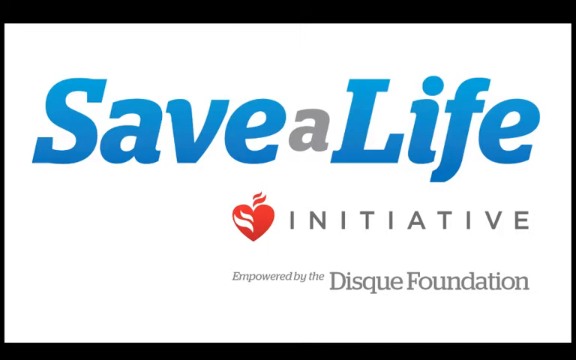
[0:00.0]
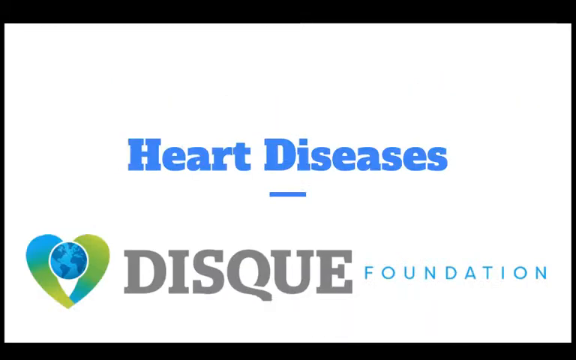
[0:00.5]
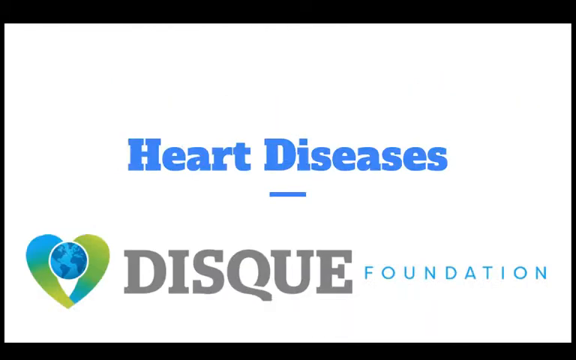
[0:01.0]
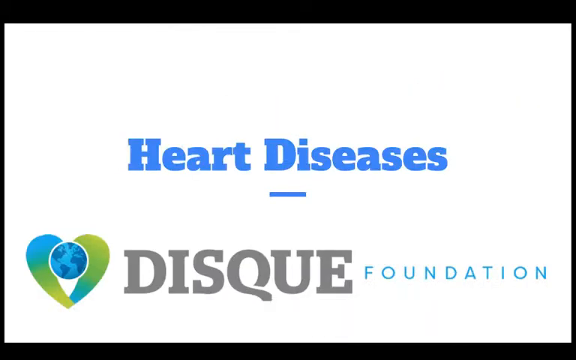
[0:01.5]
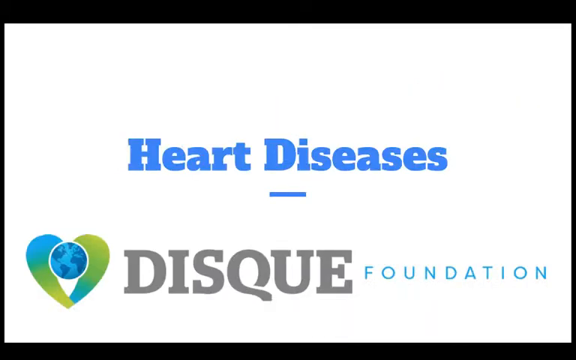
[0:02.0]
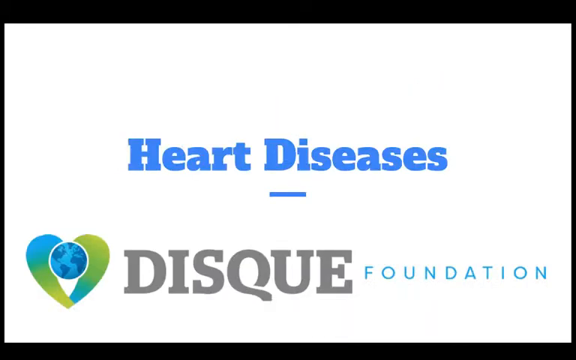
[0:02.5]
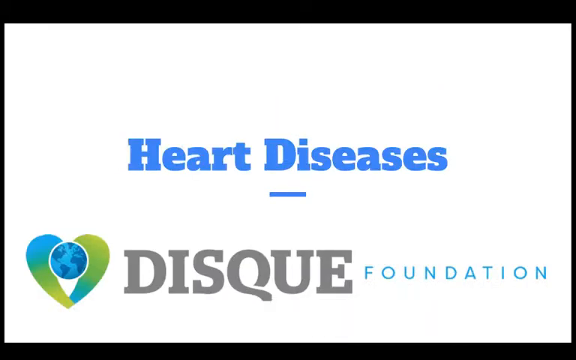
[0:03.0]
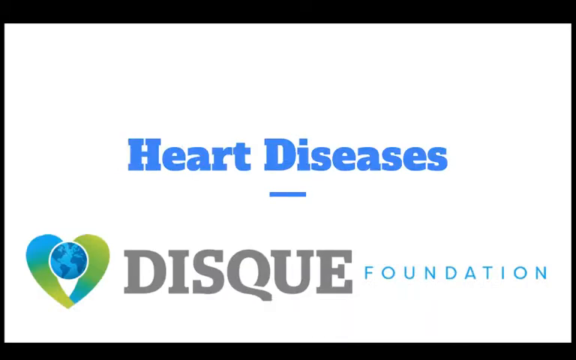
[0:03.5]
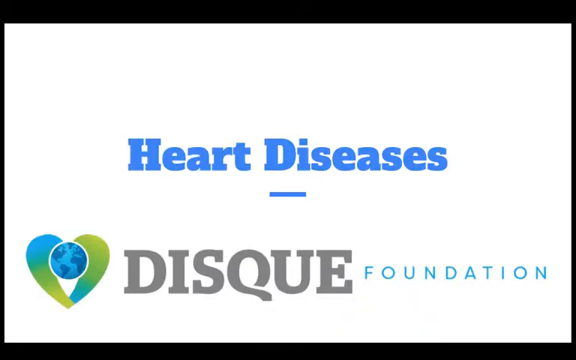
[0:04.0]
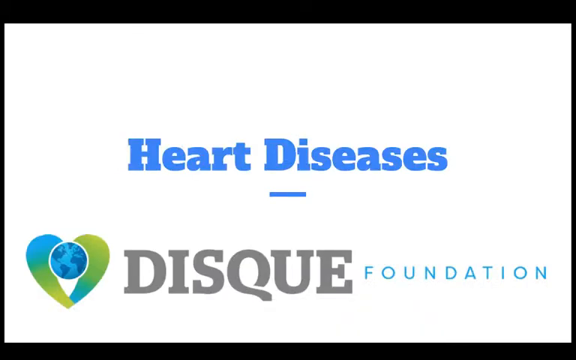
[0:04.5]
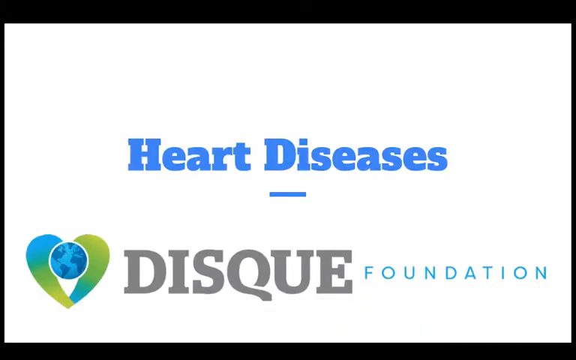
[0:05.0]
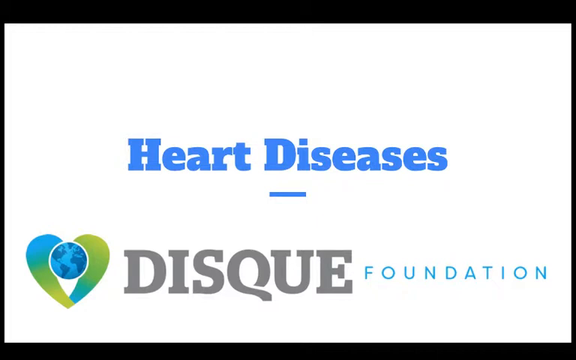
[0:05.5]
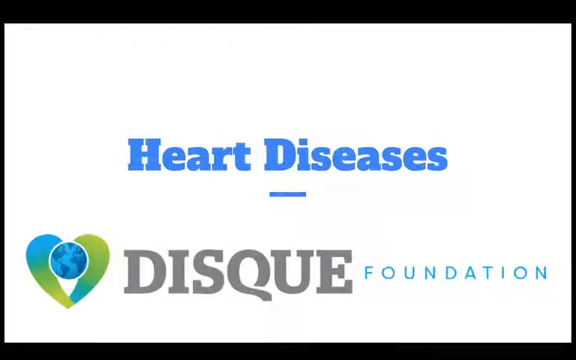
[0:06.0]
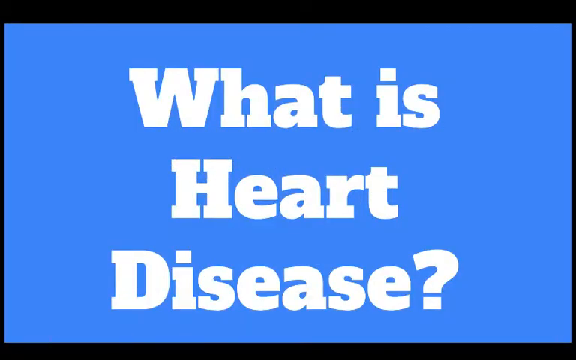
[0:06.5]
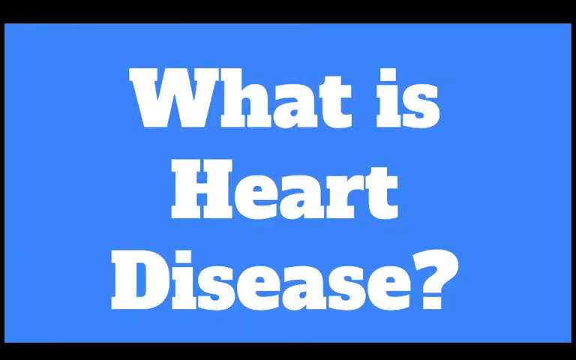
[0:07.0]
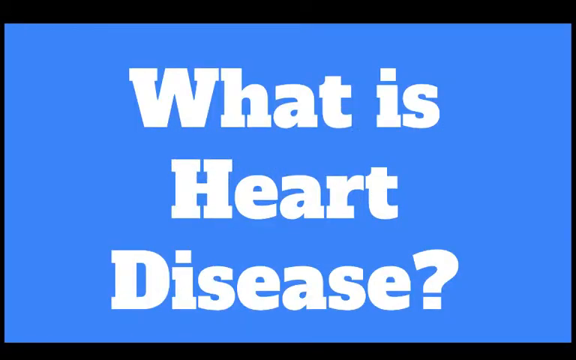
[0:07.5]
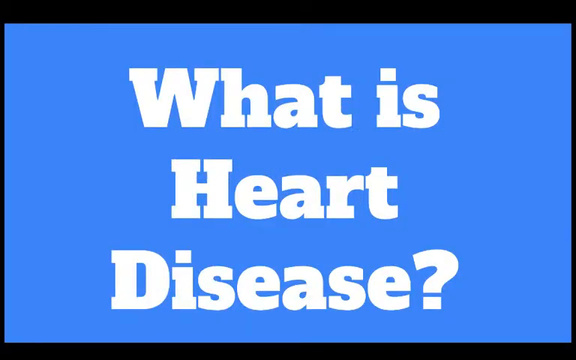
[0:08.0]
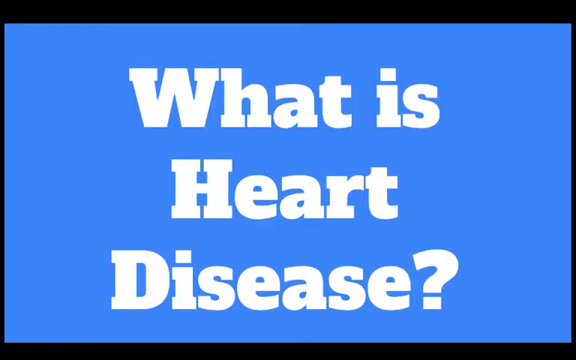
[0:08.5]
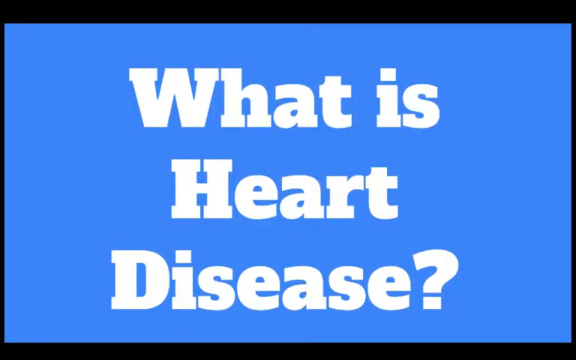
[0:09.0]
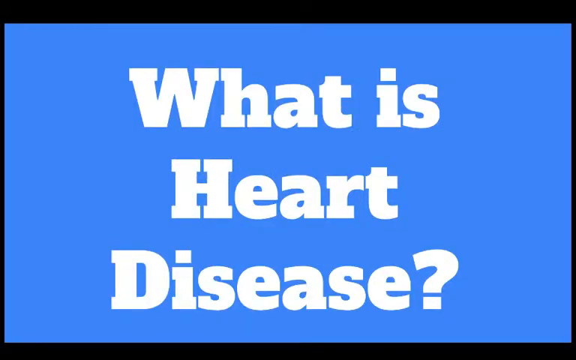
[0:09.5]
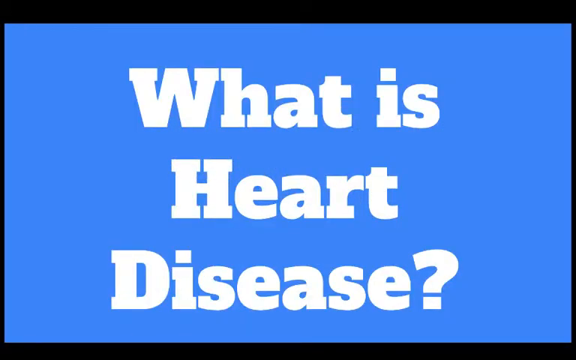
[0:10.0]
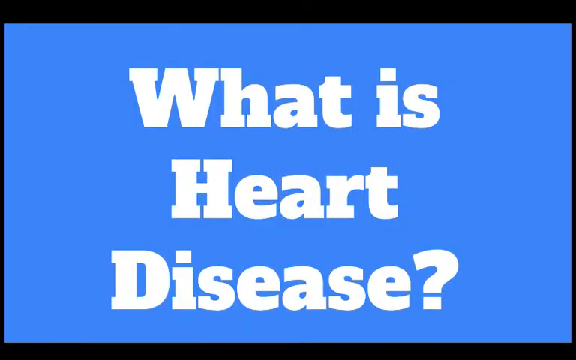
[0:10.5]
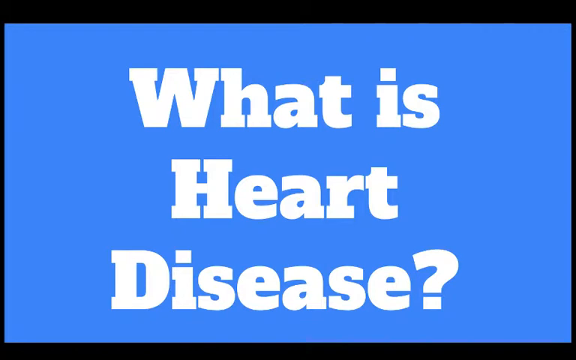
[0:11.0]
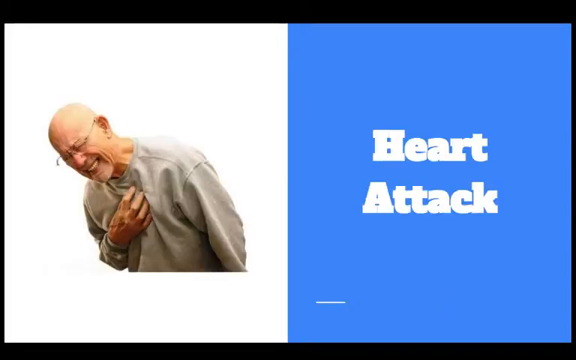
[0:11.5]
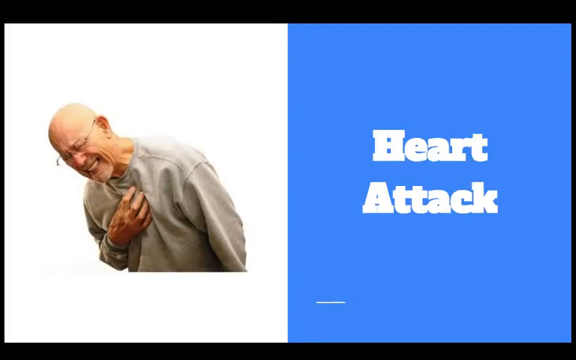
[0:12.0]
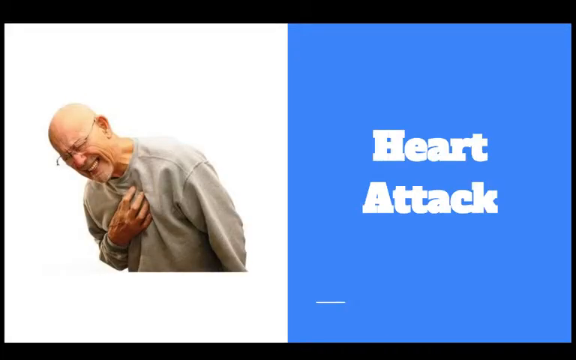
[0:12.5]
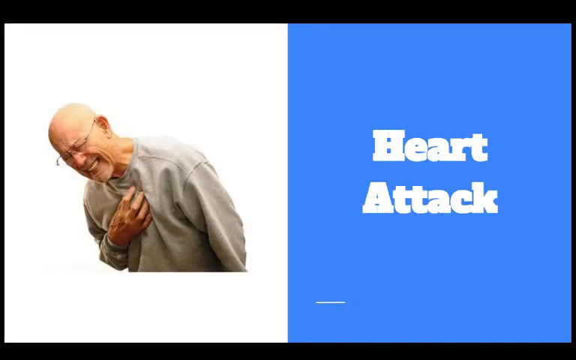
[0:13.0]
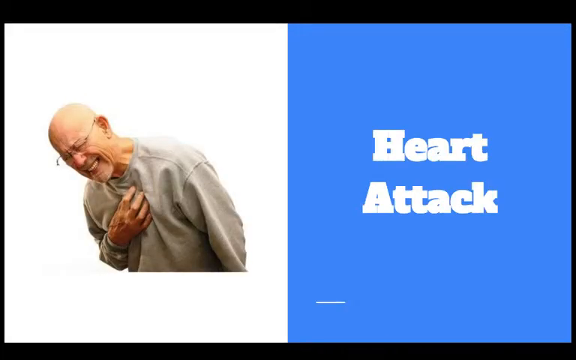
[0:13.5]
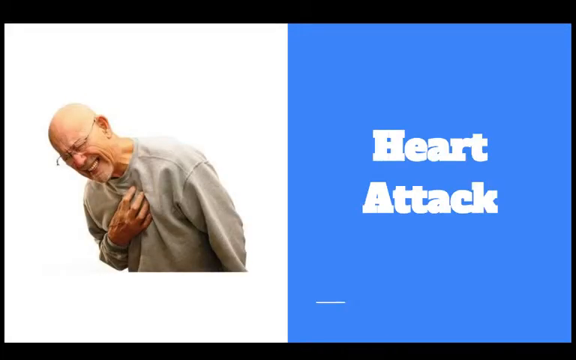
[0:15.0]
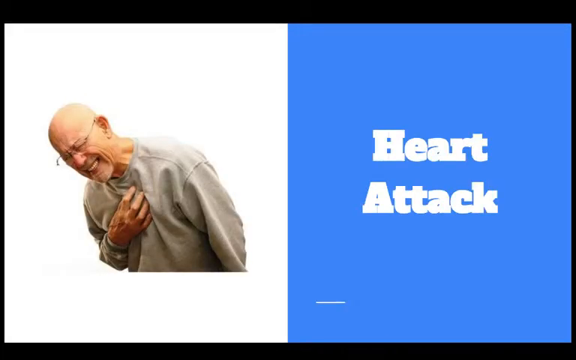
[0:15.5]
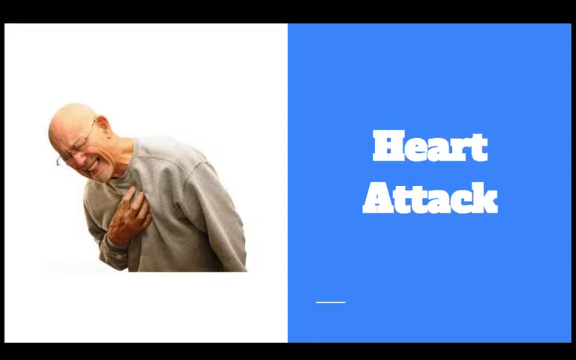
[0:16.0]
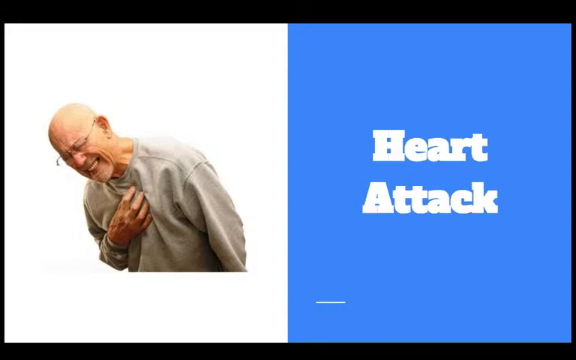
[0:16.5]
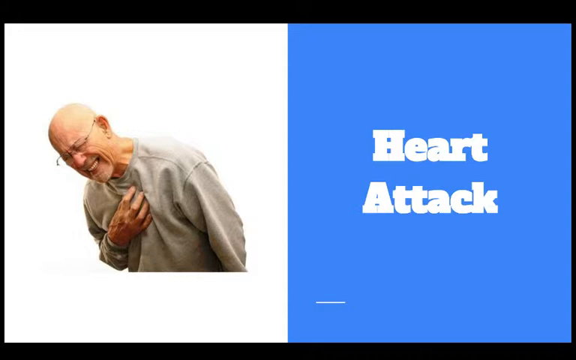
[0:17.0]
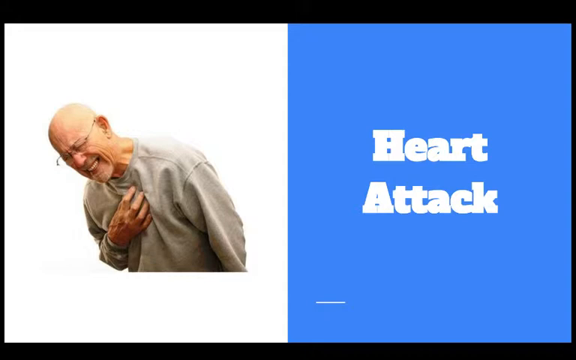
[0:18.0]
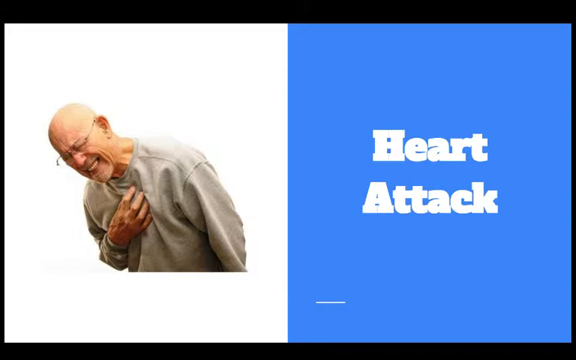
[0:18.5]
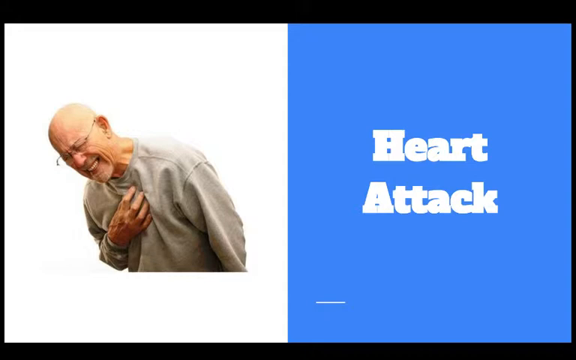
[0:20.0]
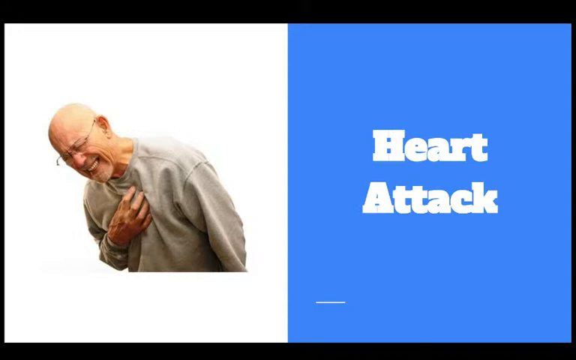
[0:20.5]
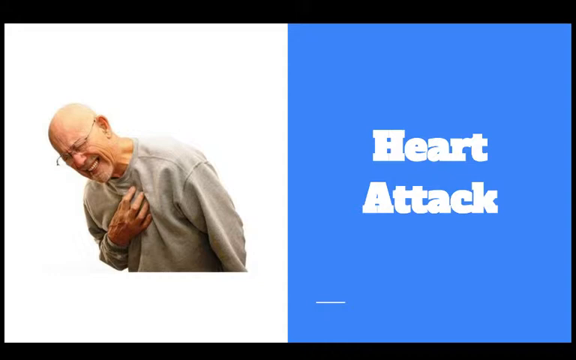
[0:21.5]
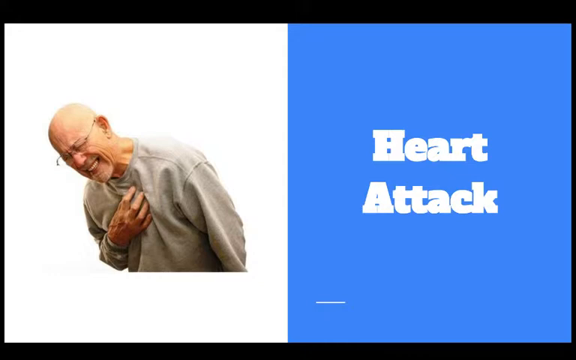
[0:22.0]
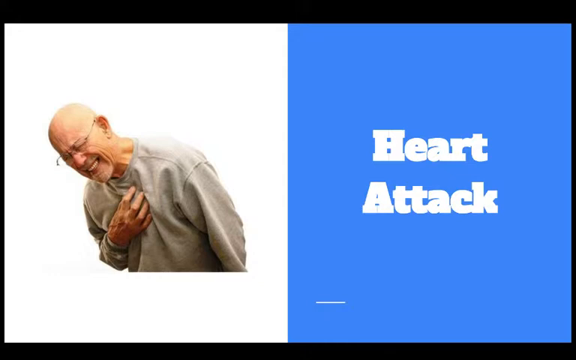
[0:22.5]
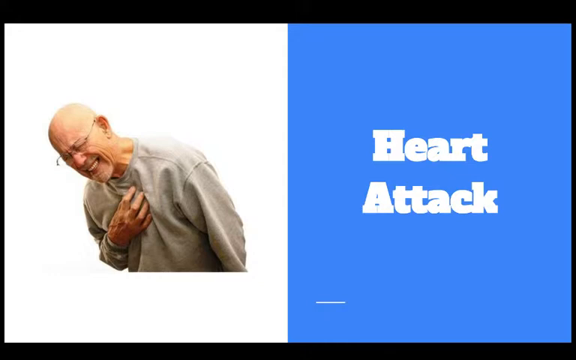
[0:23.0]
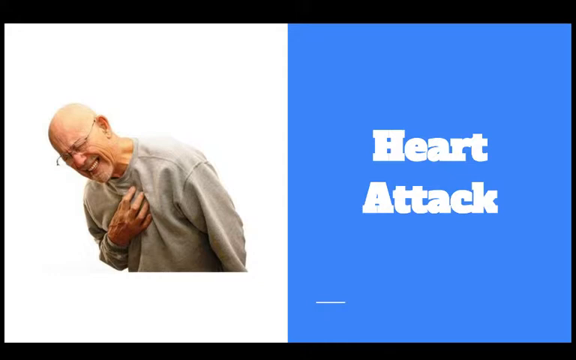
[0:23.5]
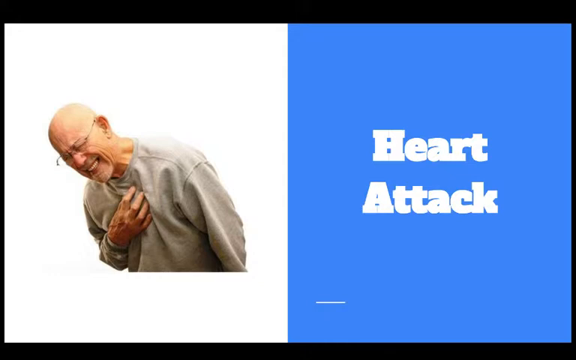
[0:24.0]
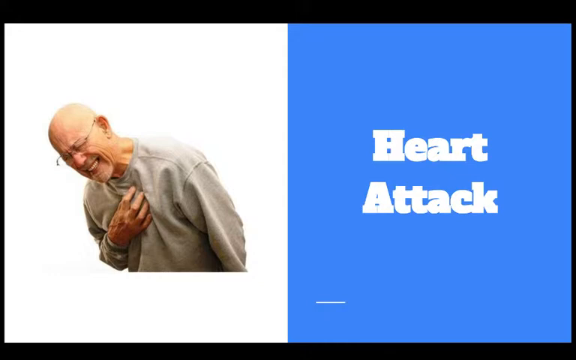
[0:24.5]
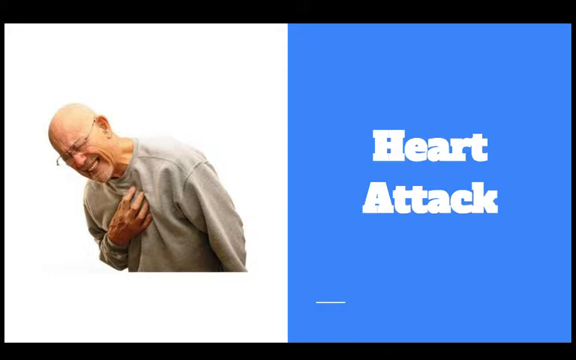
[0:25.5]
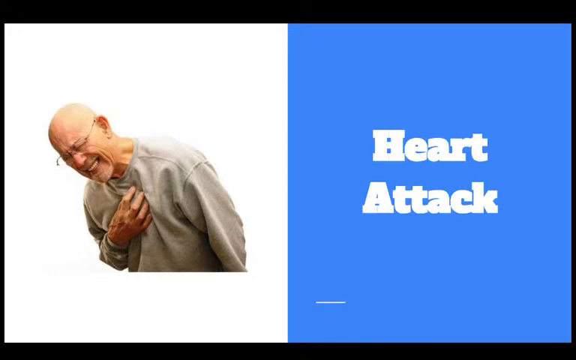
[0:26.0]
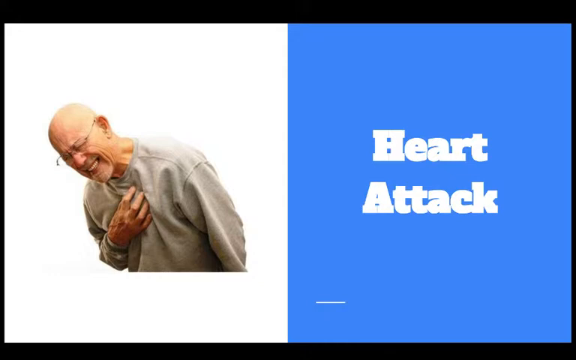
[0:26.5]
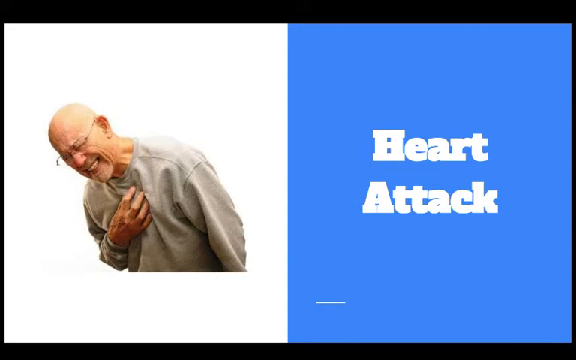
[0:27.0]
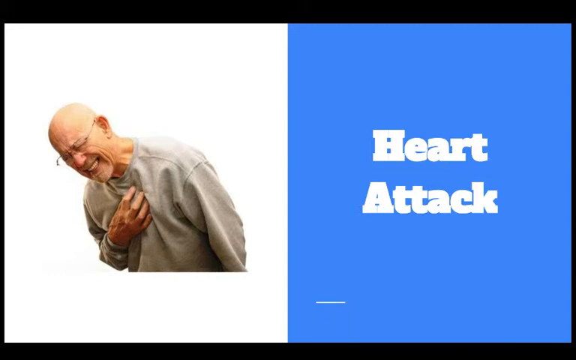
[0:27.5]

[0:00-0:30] The video begins with a white screen with blue text at the top and a grey letter in the middle; the text reads "SAVE A LIFE". Underneath is a red heart symbol with two white streaks through the left-hand side of the heart and two red streaks above its right side. Next to the heart, the word "INITIATIVE" is in grey, all caps. At the bottom, small text says "EMPOWERED BY THE", followed by slightly larger text reading "DISQUE FOUNDATION". A hard cut leads to another white screen with blue text reading "HEART DISEASES", with an underline between the D and the I. In the bottom left corner is a green and blue blended heart symbol with a blue globe in the middle of the heart and a white border around it; next to it, grey text reads "DISQUE" and light blue text reads "FOUNDATION". Another hard cut shows a light blue background with large white text across the whole screen asking the question "what is heart disease?" A hard cut then leads to a screen split vertically in half. On the left, on a white background, is an image of an elderly man in a grey jumper clutching his right hand up to the middle of his chest and grimacing in pain. On the right, on a light blue background, white text says "heart attack".